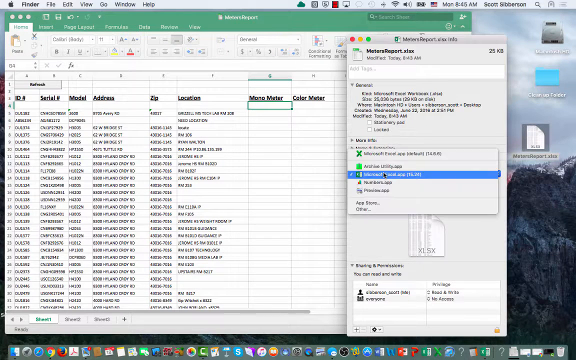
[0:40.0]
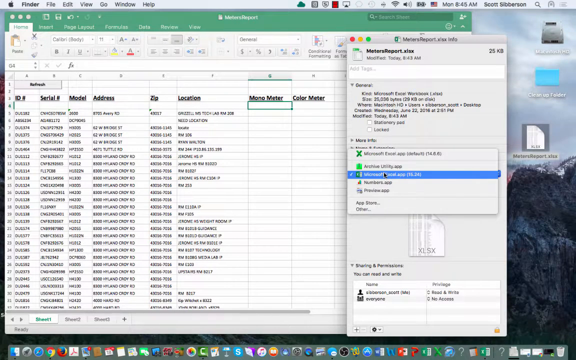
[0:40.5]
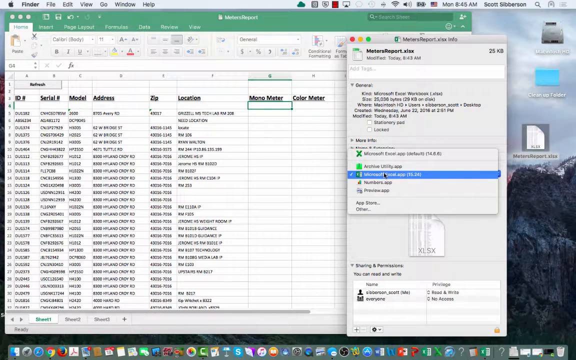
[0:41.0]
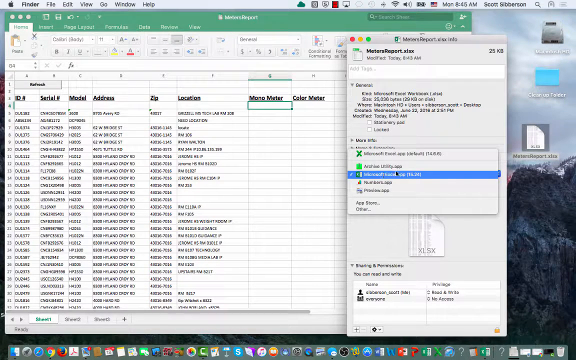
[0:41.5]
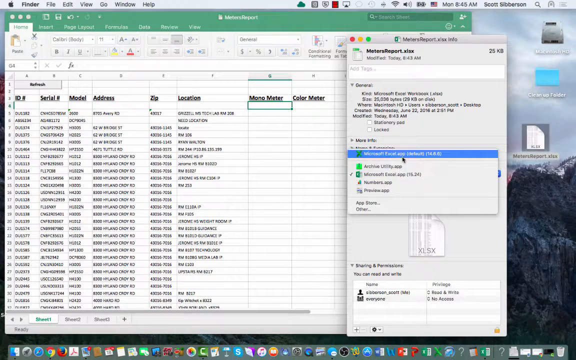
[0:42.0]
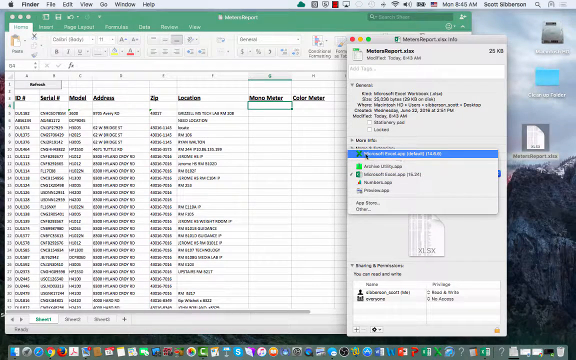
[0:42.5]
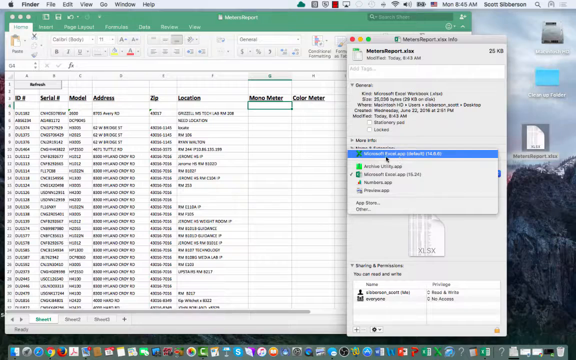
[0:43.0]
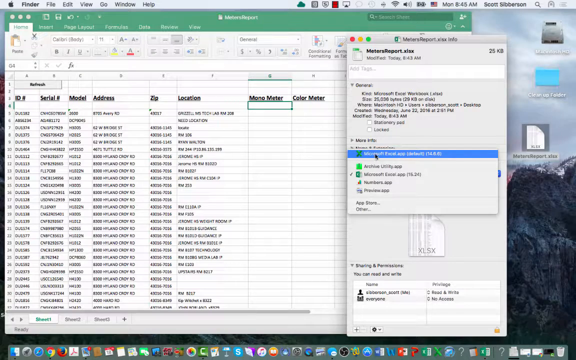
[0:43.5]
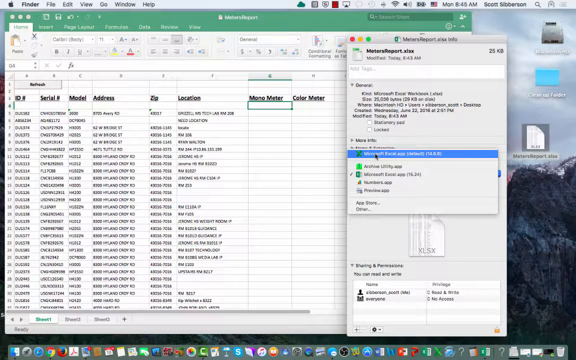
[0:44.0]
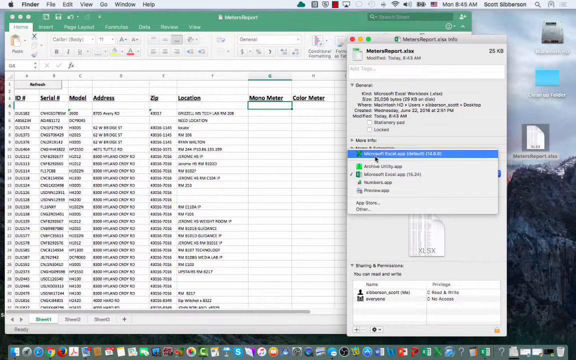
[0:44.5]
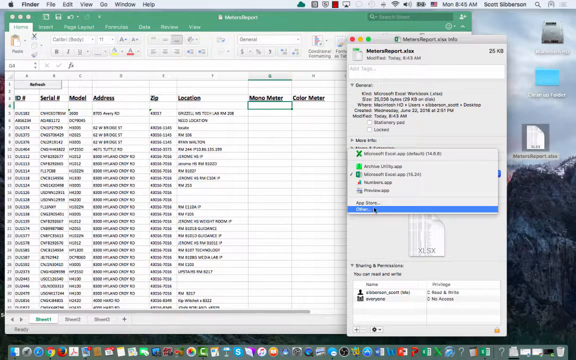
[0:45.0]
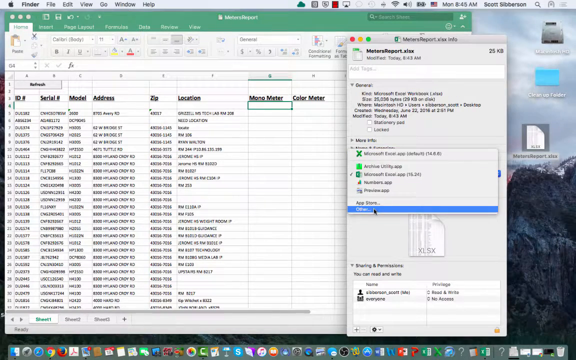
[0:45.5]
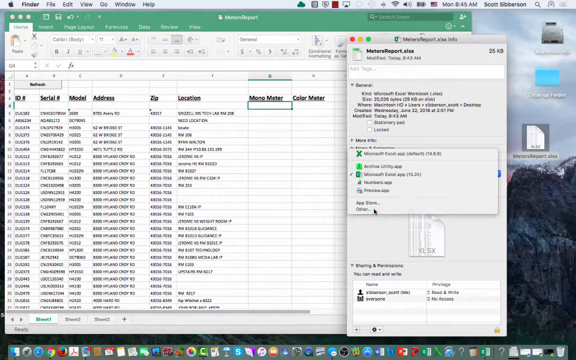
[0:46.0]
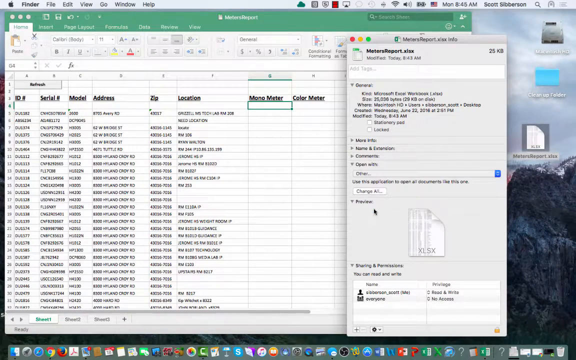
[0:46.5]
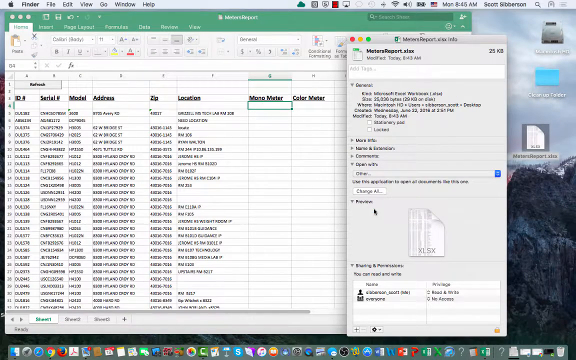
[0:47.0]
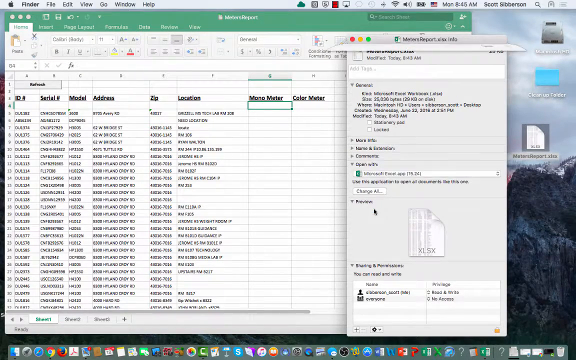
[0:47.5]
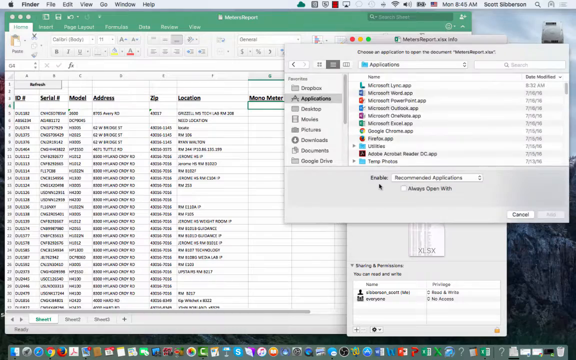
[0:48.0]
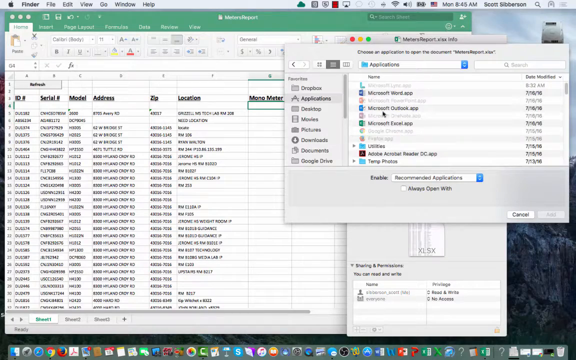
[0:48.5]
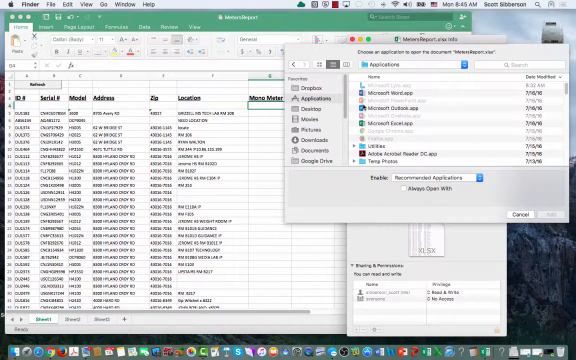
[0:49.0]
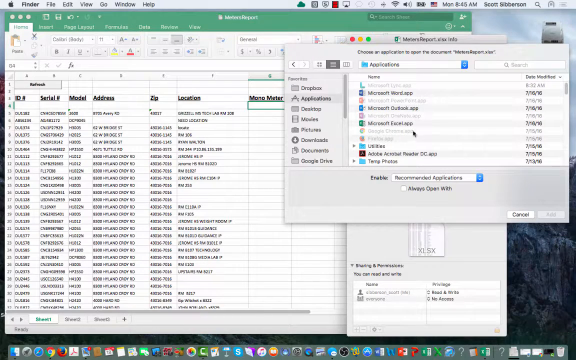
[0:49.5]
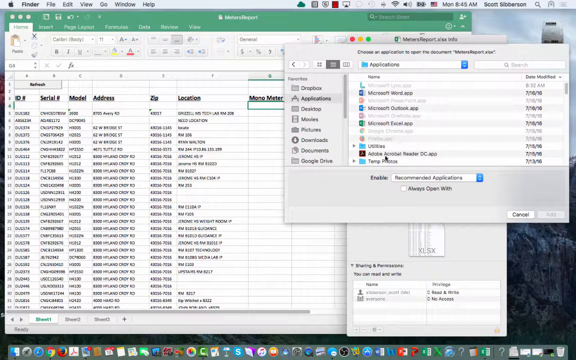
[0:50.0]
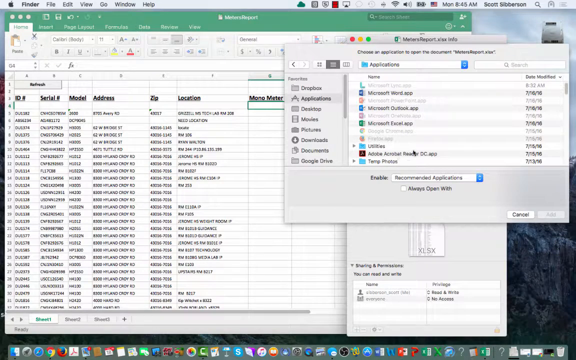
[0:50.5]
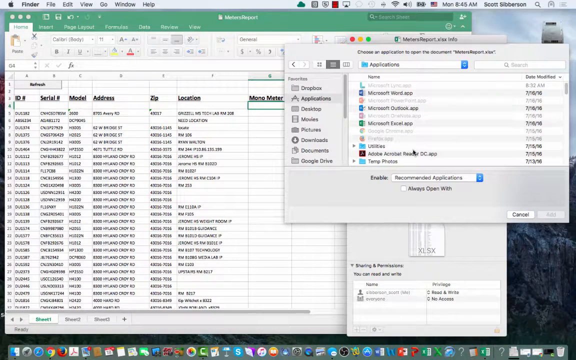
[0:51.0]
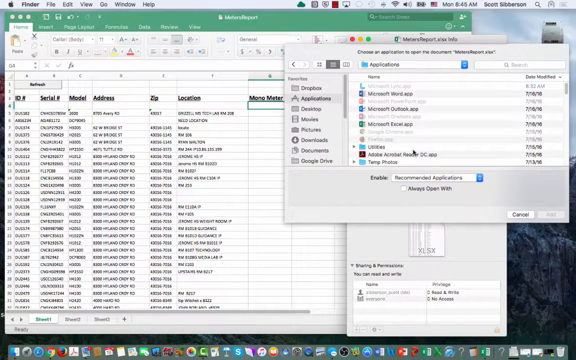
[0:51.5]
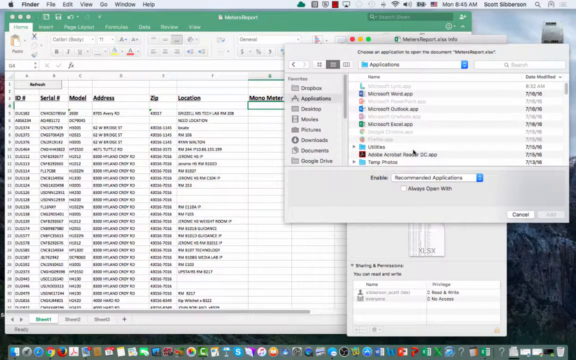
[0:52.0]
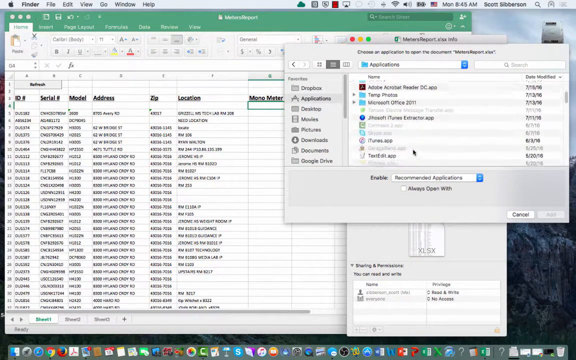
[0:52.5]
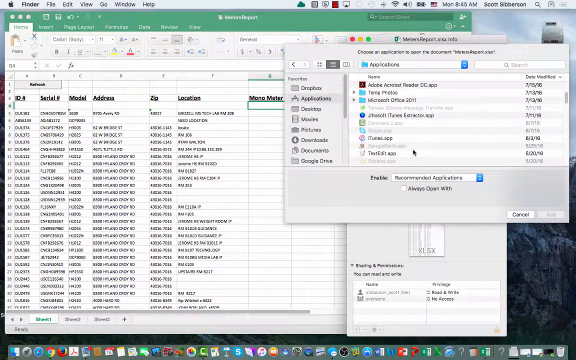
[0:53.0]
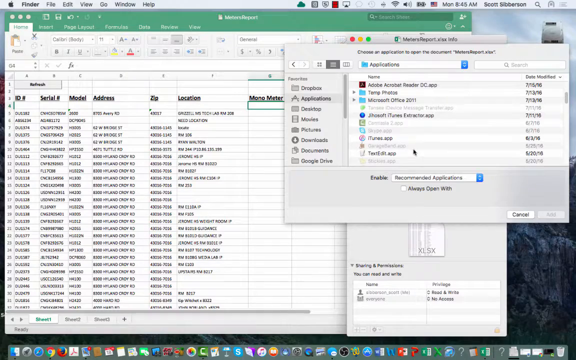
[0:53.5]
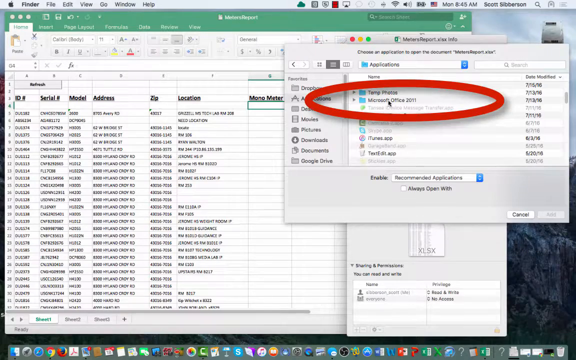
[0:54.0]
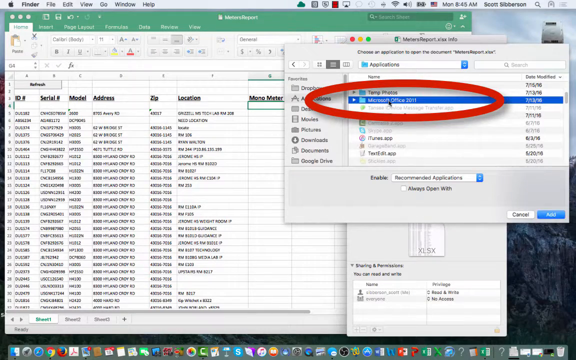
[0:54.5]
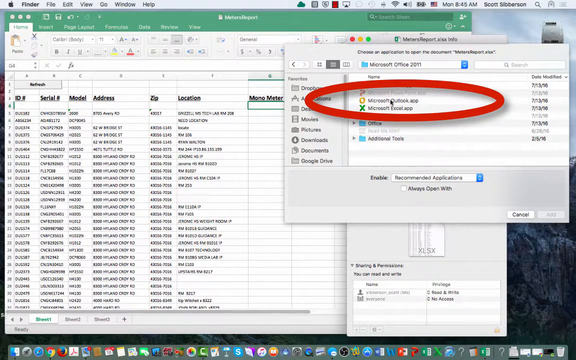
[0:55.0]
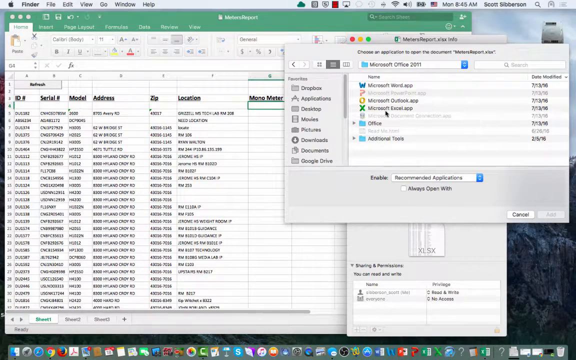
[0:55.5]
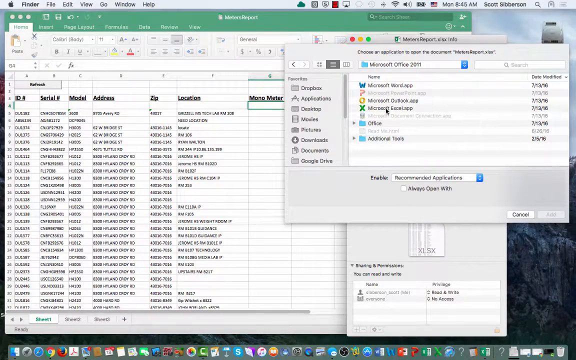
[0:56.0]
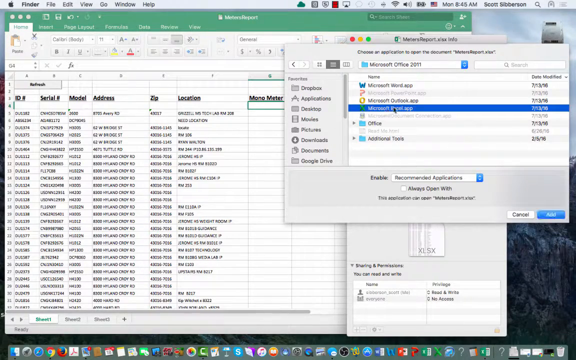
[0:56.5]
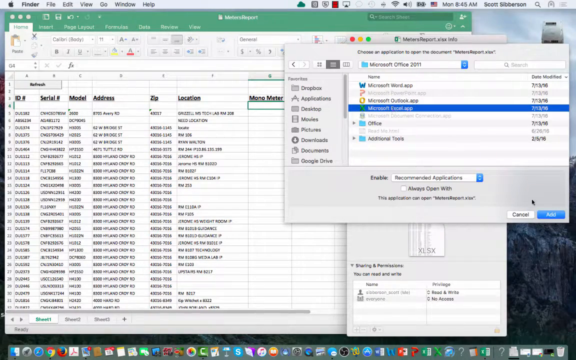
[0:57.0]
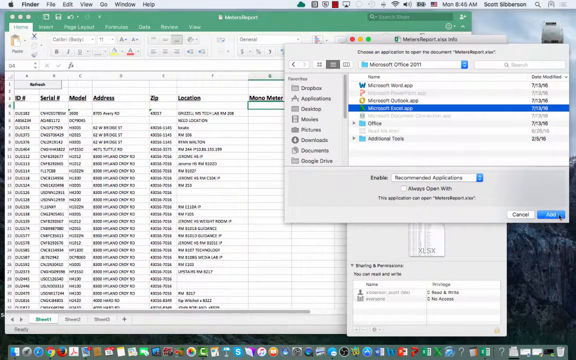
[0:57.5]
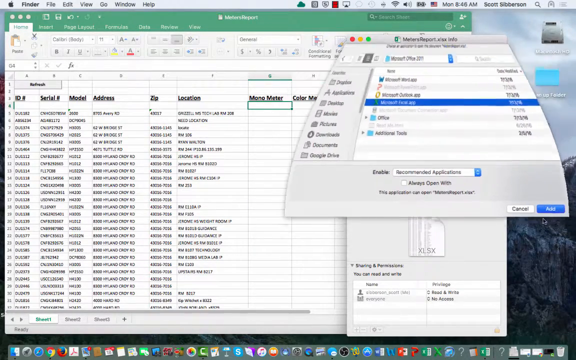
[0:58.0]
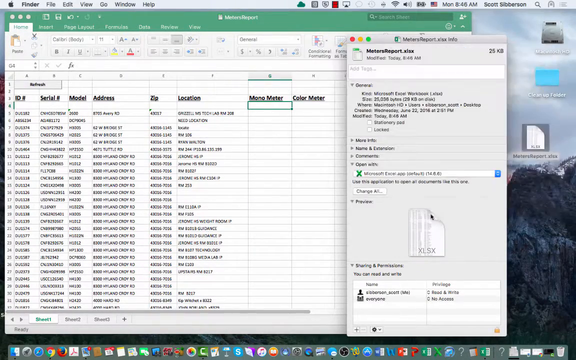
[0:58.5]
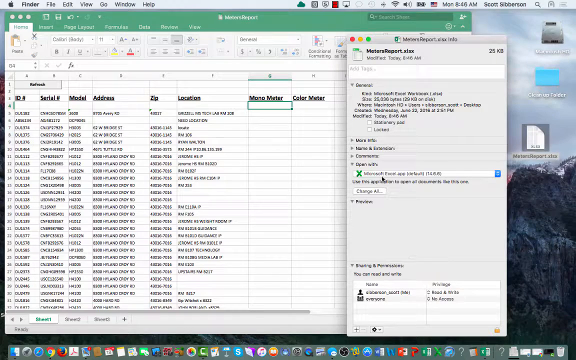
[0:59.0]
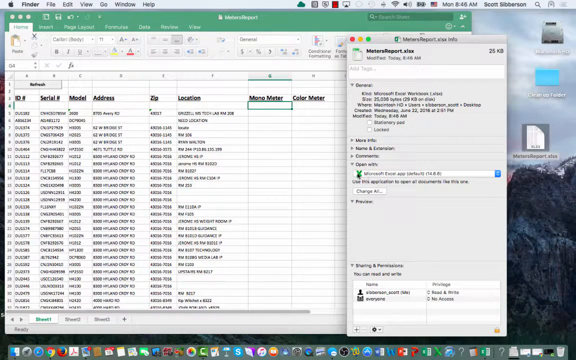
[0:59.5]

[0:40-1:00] The person clicks on "Microsoft Excel app", moves down through the menu options that appear, and clicks the category "other". A different pop-up appears reading "choose an application to open the document METERS report", listing several programs that could open the file. The person scrolls down to "Microsoft Office 2011", and a big red circle appears over it. Clicking it brings up a new set of options, one of which is the Microsoft Excel app. They click "add" and the pop-up disappears. Back in the "open with" pop-up, the setting reads "Microsoft Excel app". The window also shows that the file was created on June 22, 2016 at 2:51 p.m.